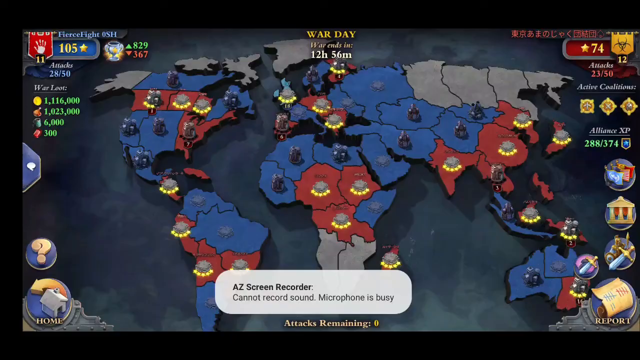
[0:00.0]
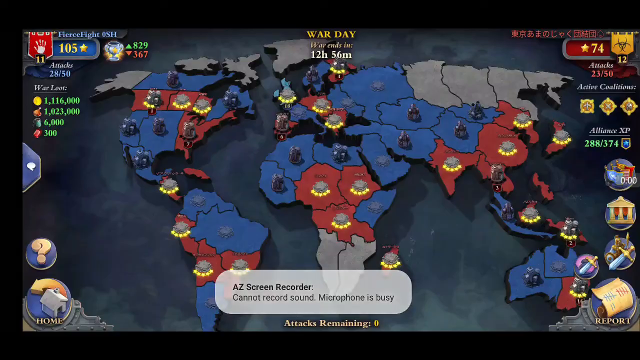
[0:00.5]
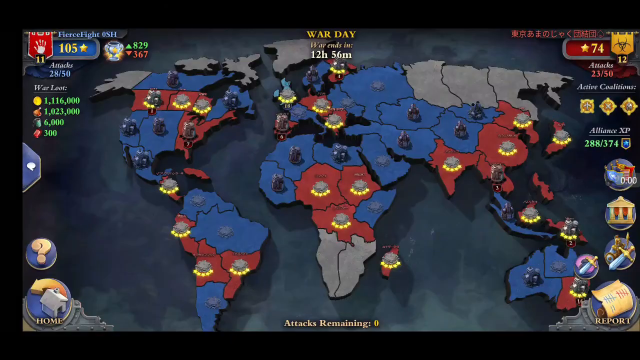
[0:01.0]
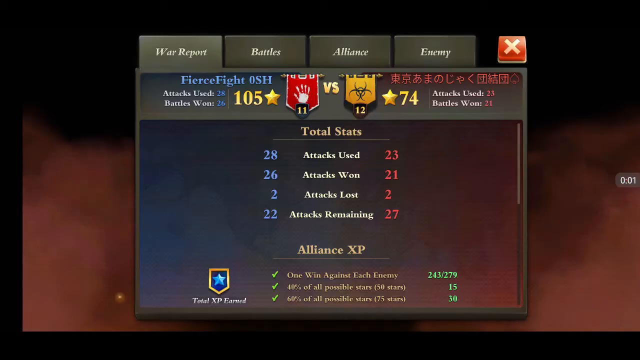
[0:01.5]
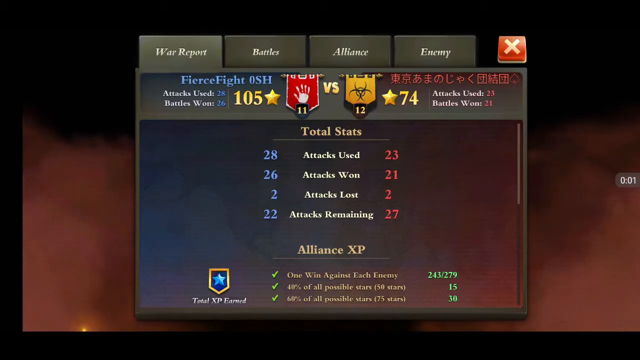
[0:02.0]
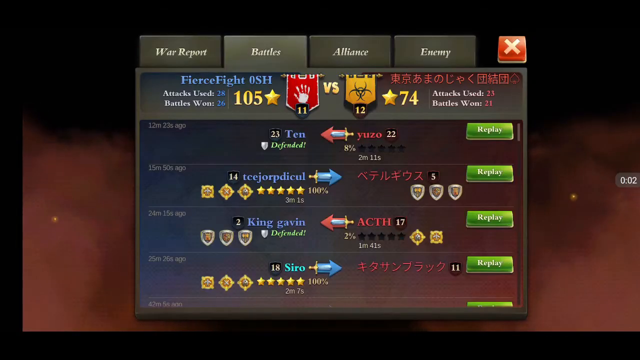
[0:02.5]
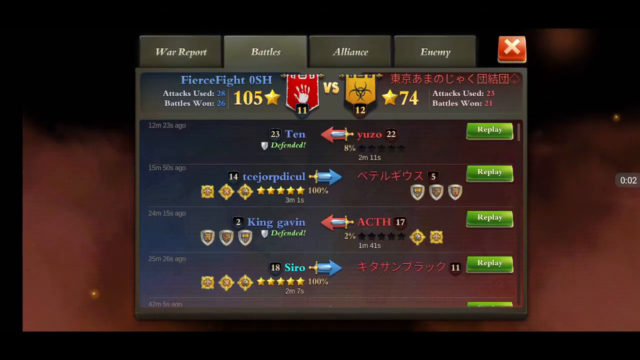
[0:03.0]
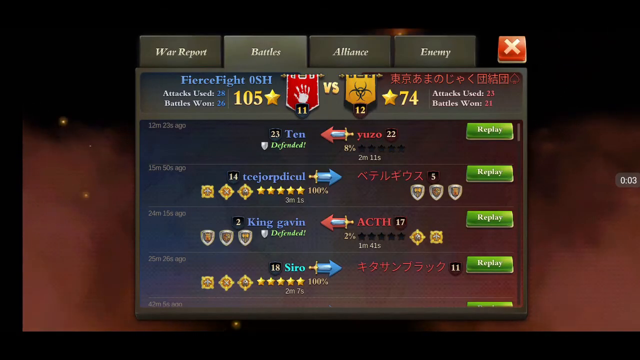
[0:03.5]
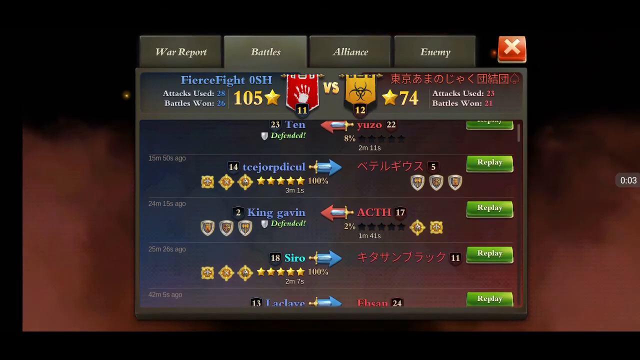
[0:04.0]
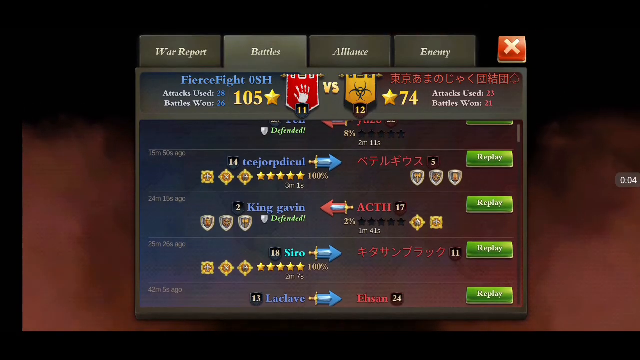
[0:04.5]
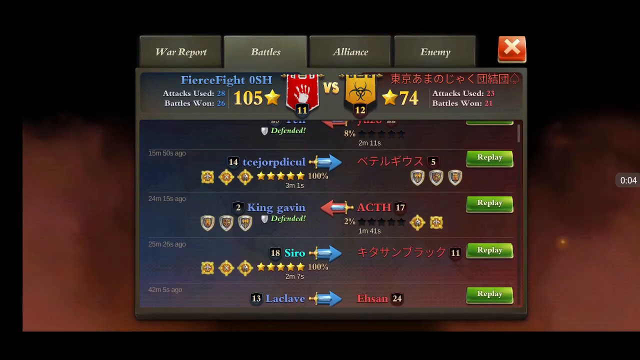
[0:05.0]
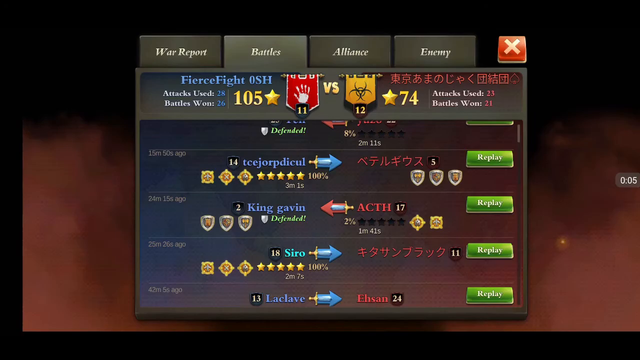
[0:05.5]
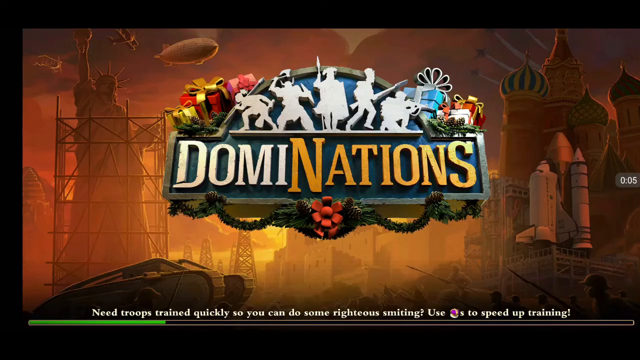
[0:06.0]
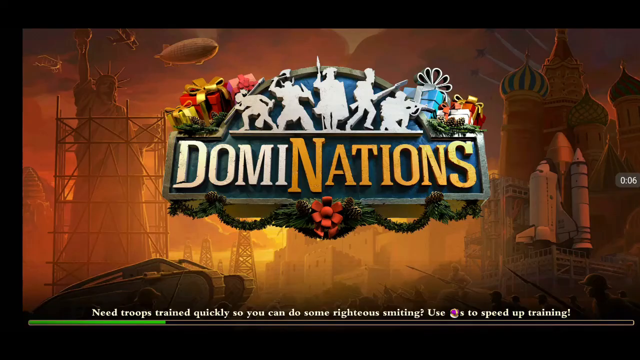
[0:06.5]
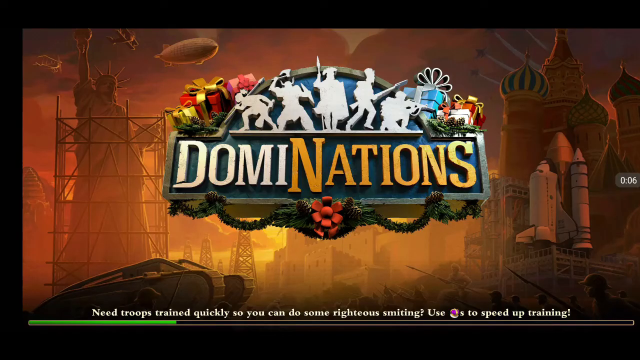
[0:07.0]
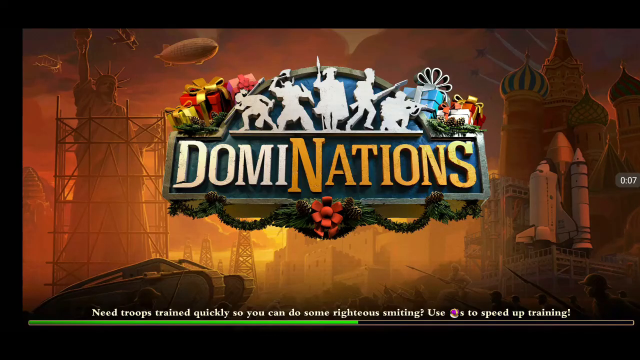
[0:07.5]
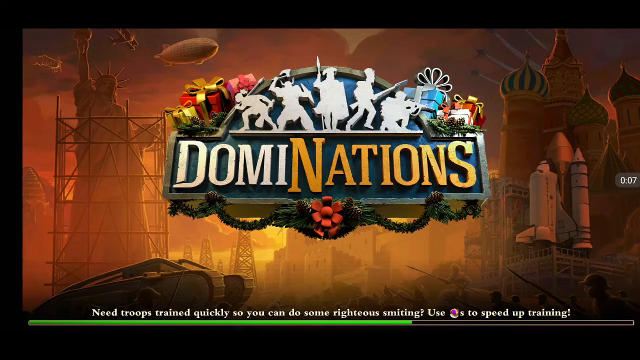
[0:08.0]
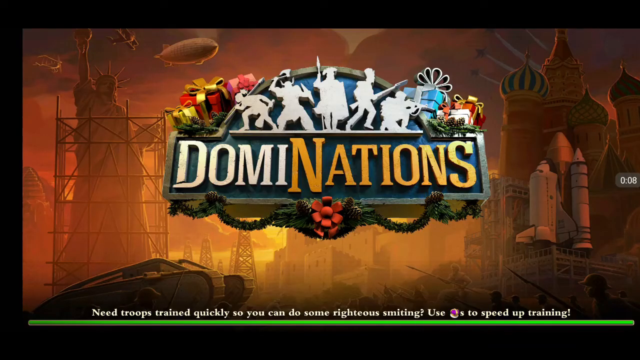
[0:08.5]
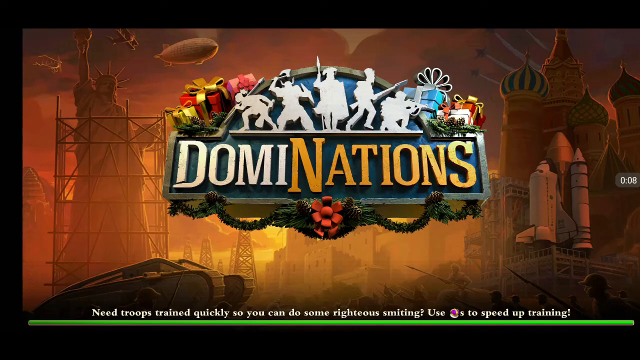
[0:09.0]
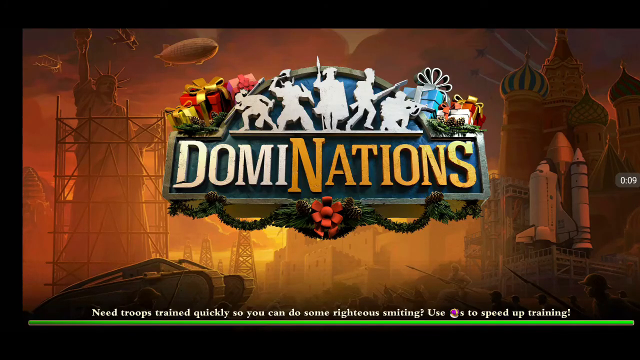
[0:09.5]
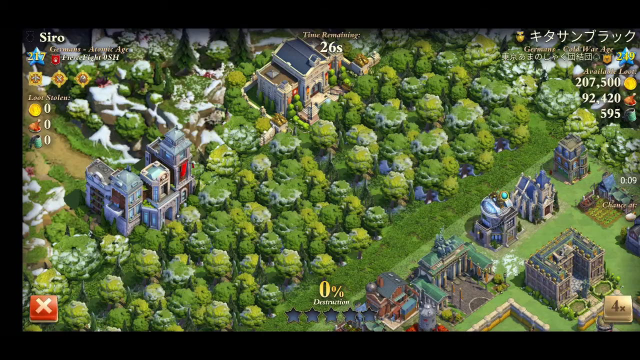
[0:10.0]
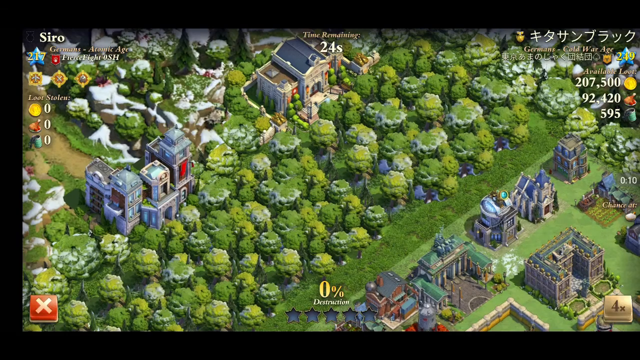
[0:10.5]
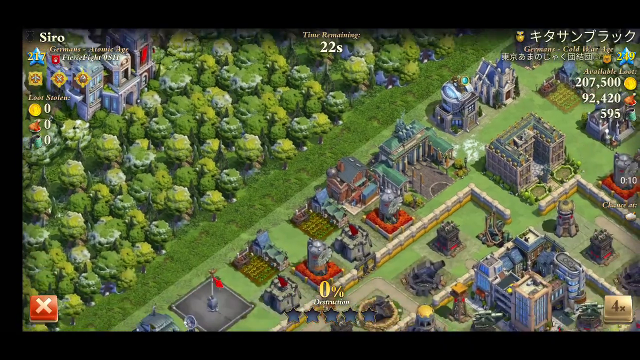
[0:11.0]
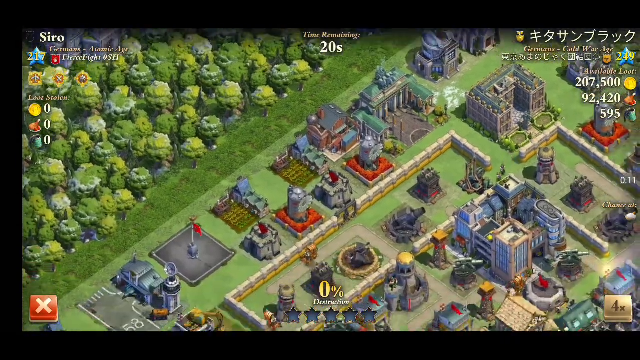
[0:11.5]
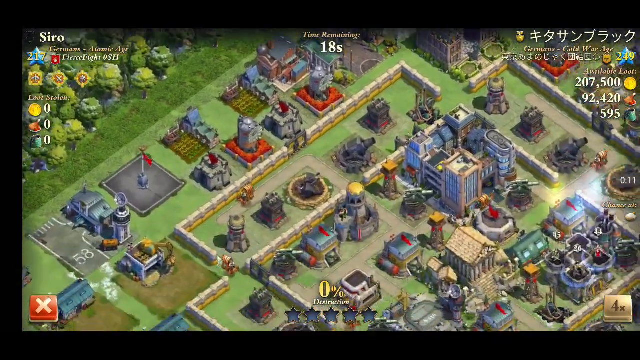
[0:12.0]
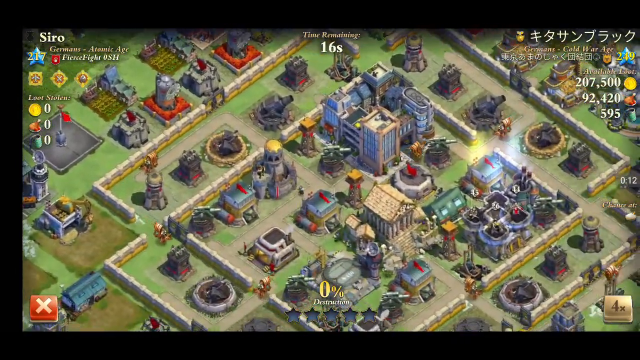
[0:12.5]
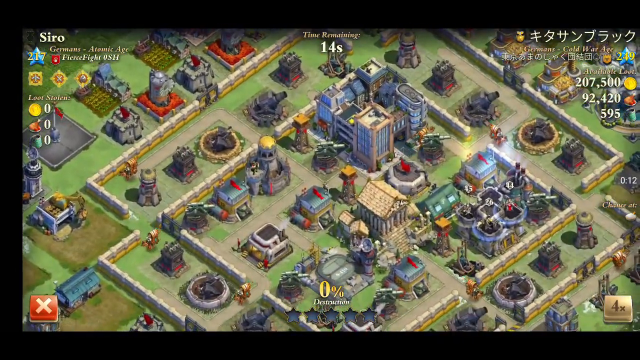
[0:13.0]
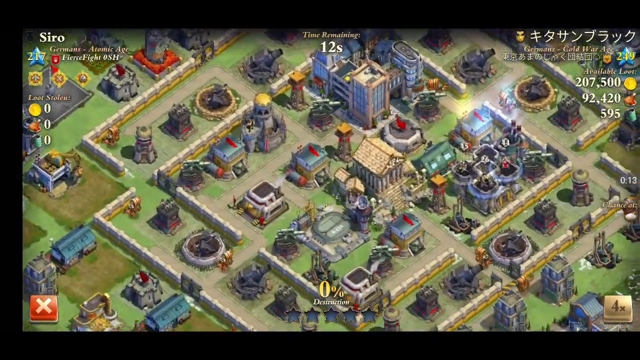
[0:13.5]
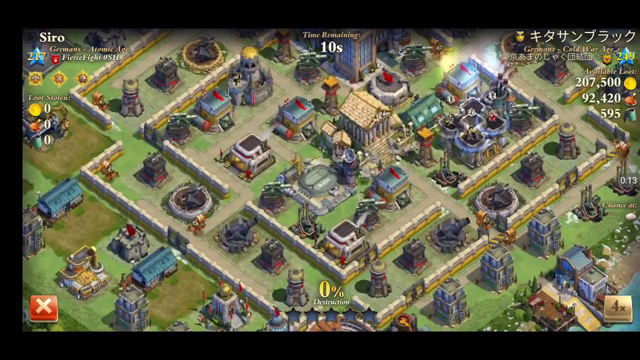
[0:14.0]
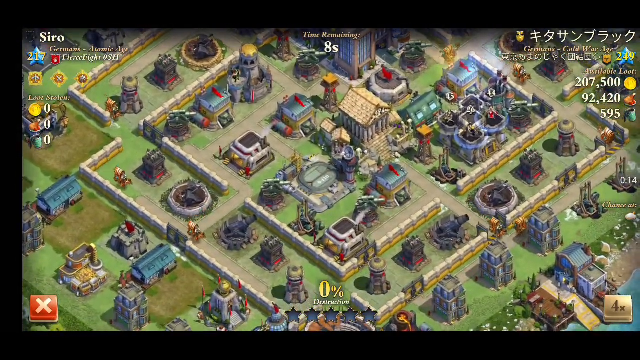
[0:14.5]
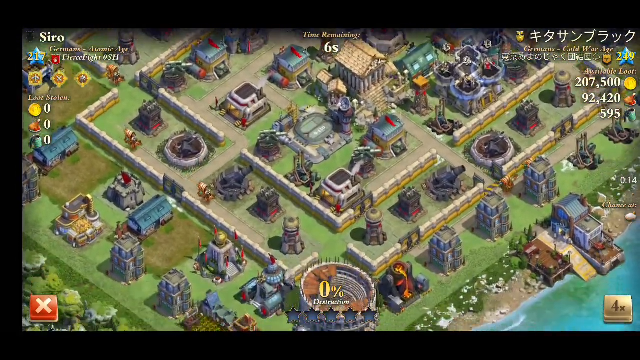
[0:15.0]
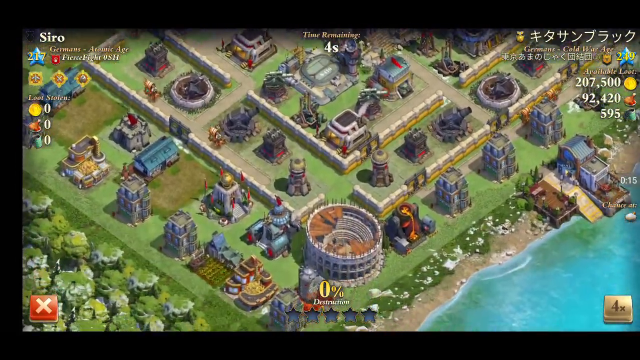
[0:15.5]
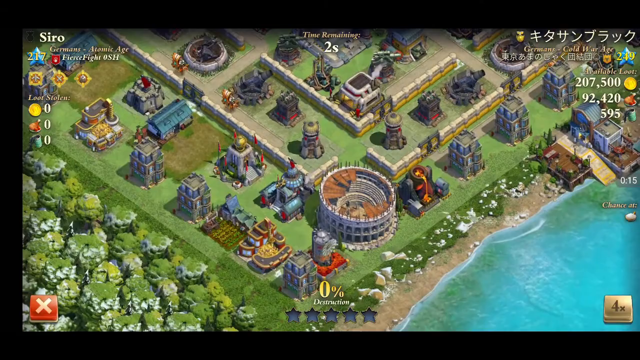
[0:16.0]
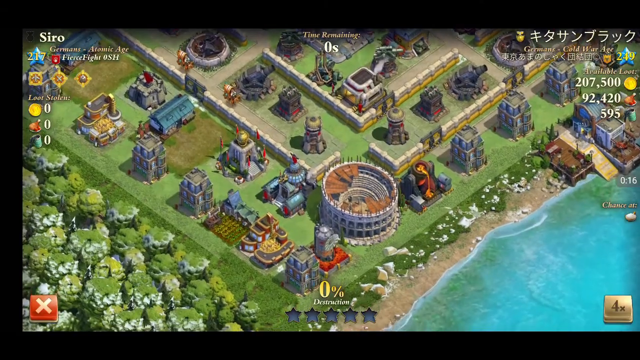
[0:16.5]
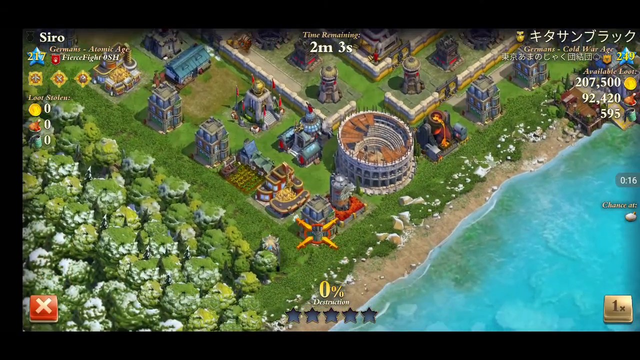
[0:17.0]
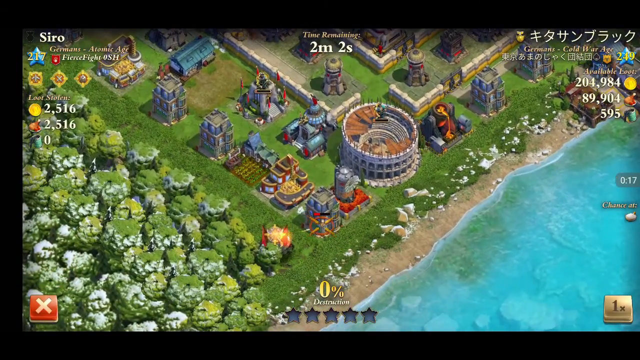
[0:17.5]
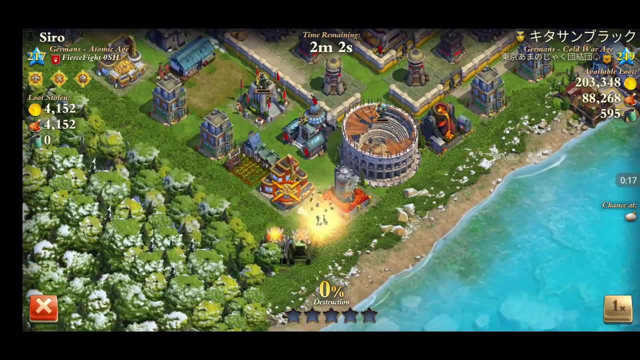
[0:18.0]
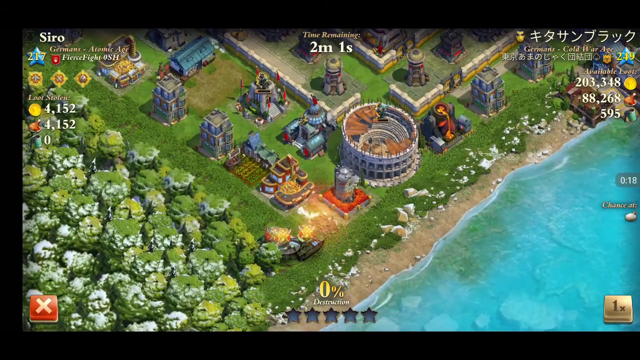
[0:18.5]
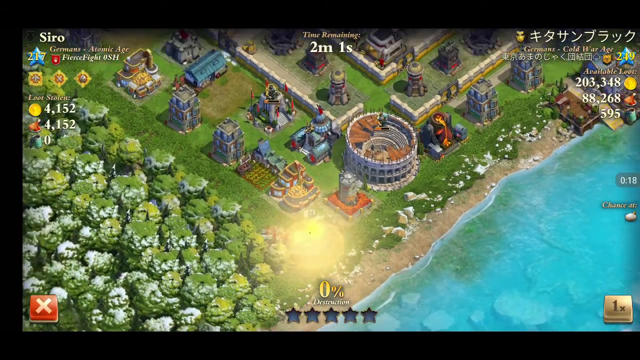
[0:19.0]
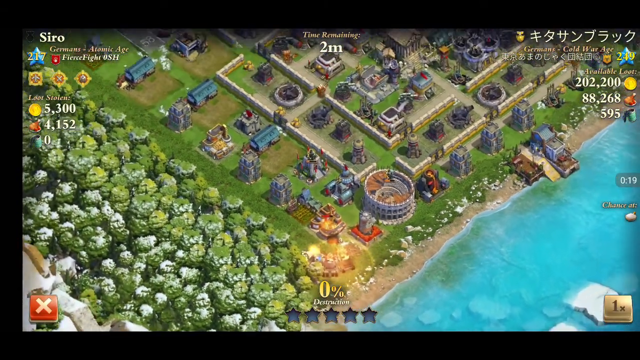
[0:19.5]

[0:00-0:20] The game, called Dominations, appears to center on a large world war, with two players battling over the world. A big overview of the world map shows the territories and countries each player possesses and controls. Different sections for the war report, battles and alliance are visible. The view then goes into a replay section to look at a replay of a battle just fought against the player who was shown in the top right, apparently the one the player is in main conflict with. It looks like a base builder type game with some tower defense structures, and the attacking side appears to come in with tanks to attack the enemy's territory.